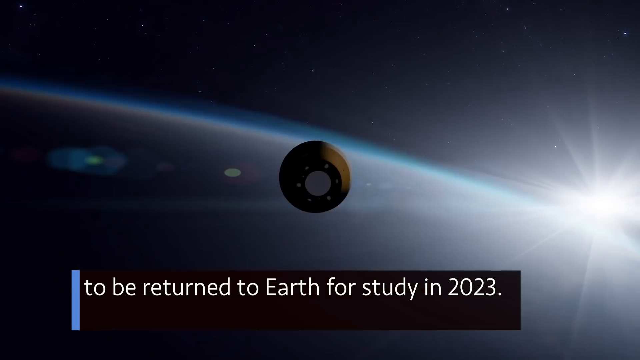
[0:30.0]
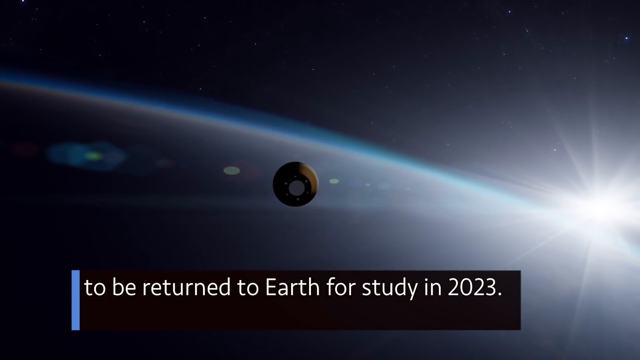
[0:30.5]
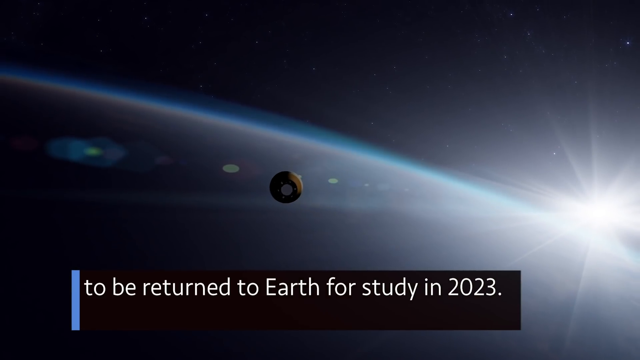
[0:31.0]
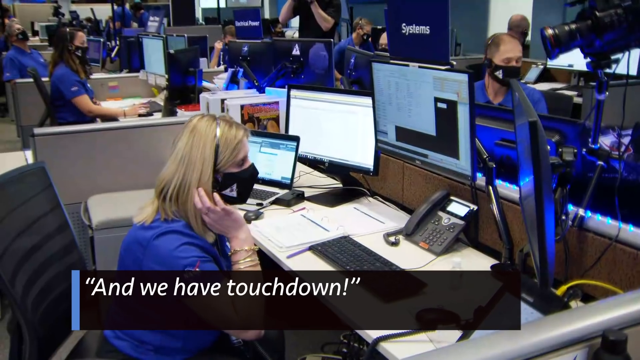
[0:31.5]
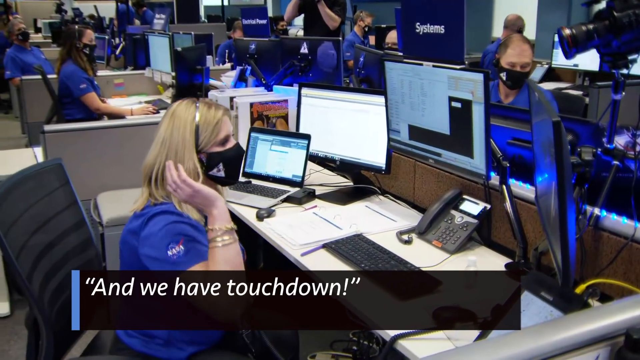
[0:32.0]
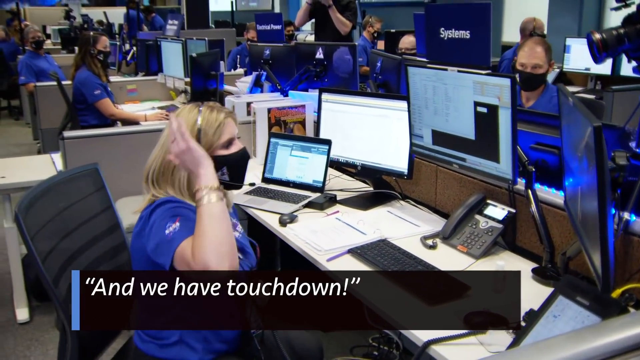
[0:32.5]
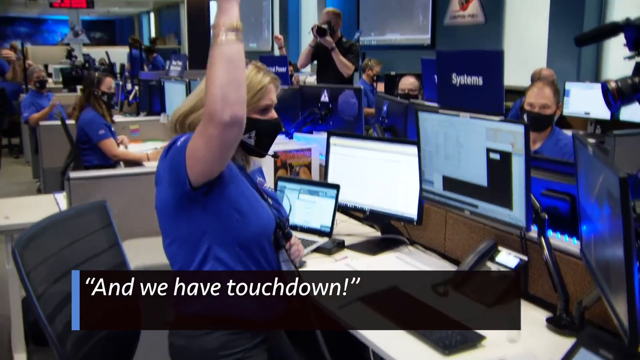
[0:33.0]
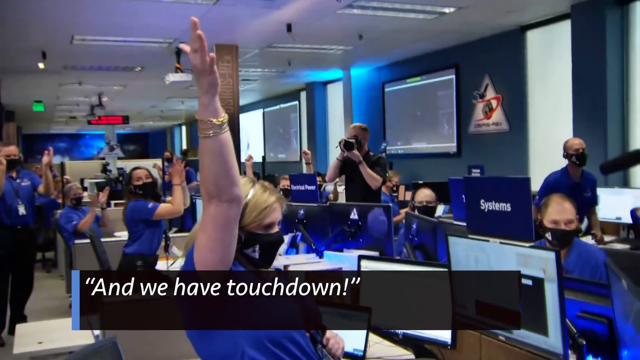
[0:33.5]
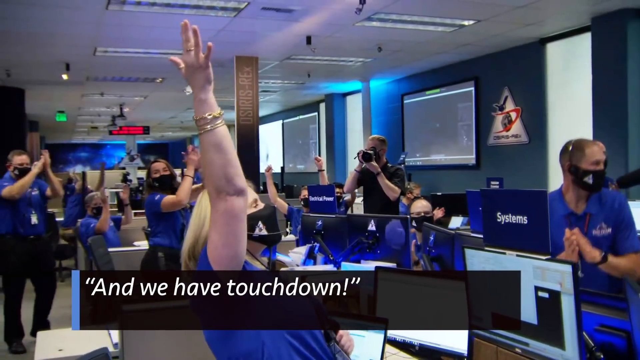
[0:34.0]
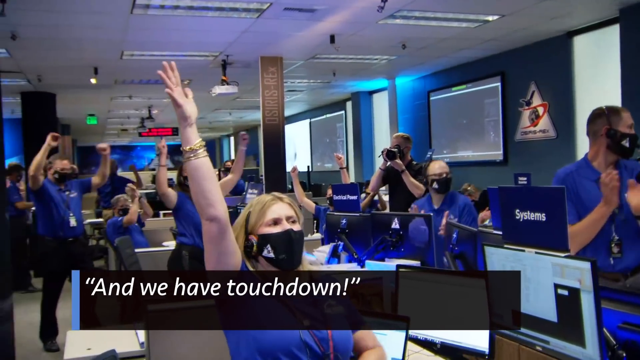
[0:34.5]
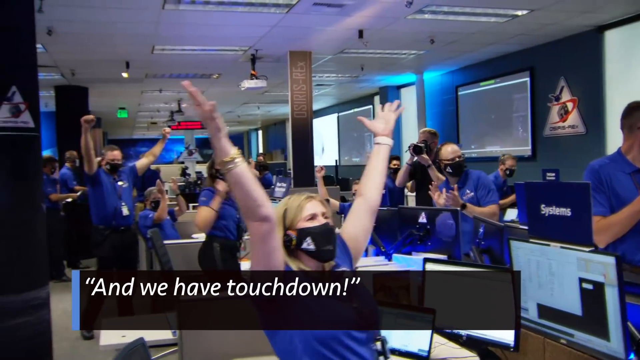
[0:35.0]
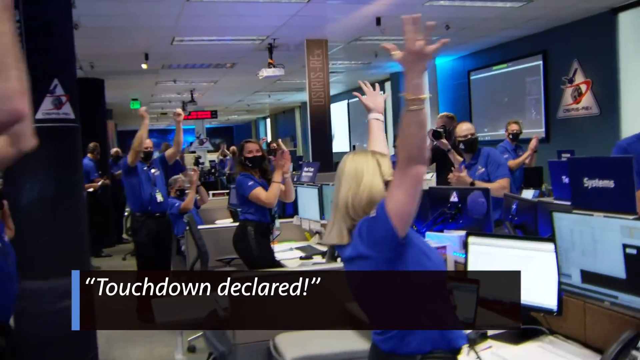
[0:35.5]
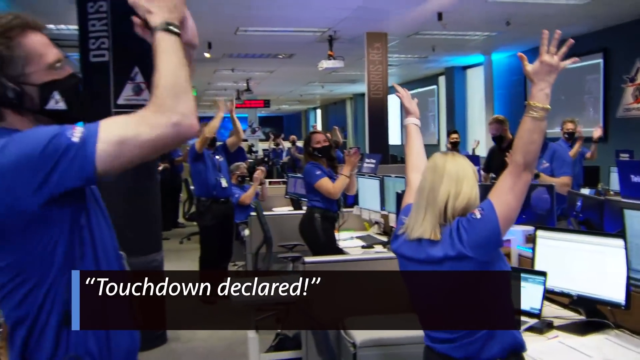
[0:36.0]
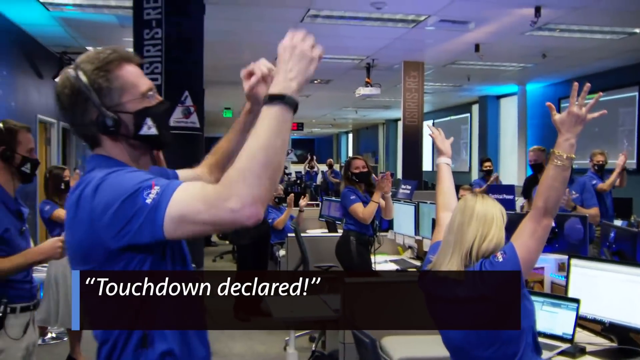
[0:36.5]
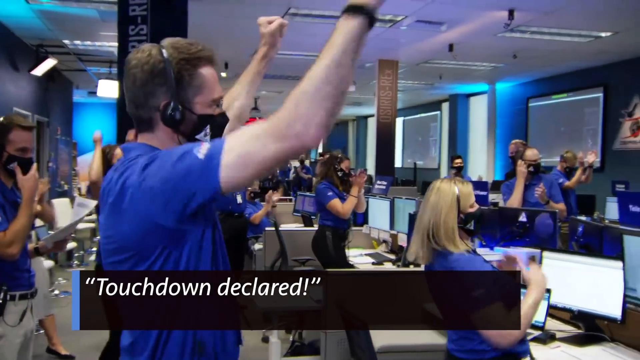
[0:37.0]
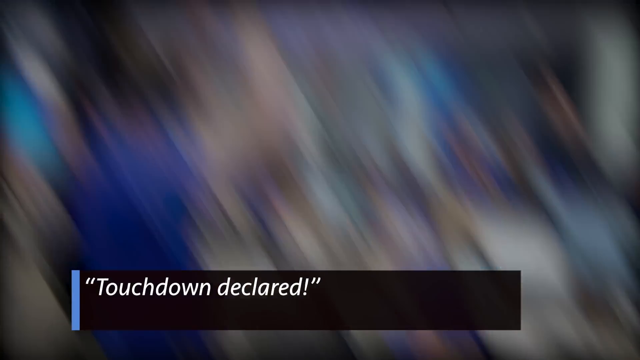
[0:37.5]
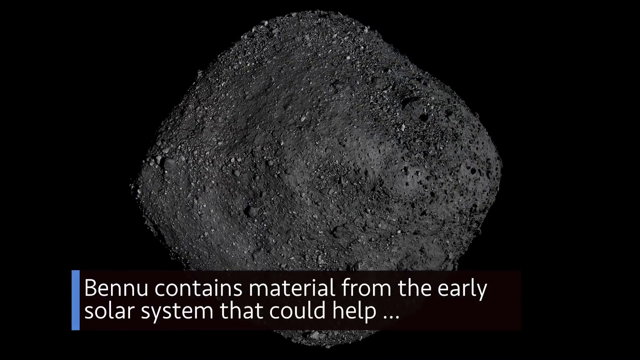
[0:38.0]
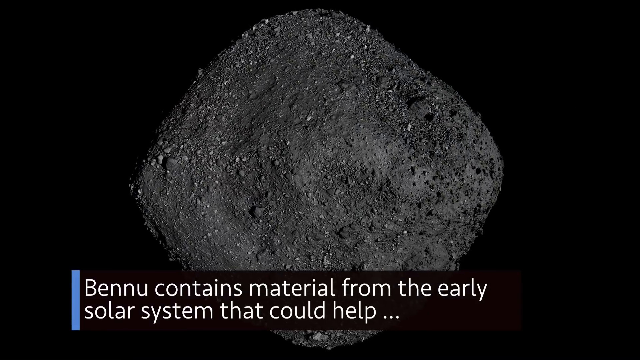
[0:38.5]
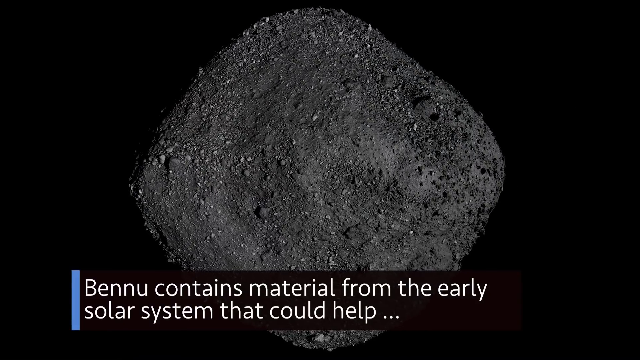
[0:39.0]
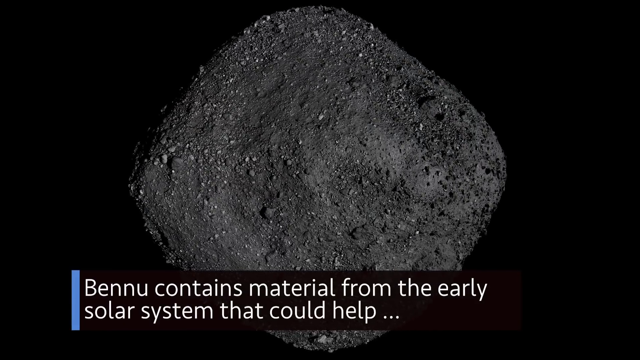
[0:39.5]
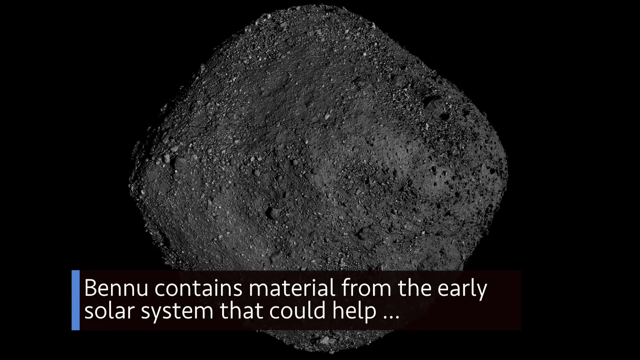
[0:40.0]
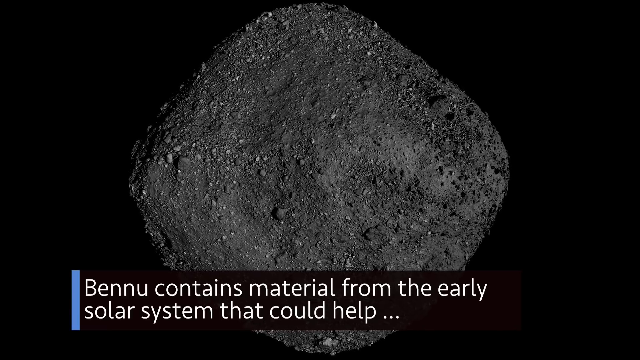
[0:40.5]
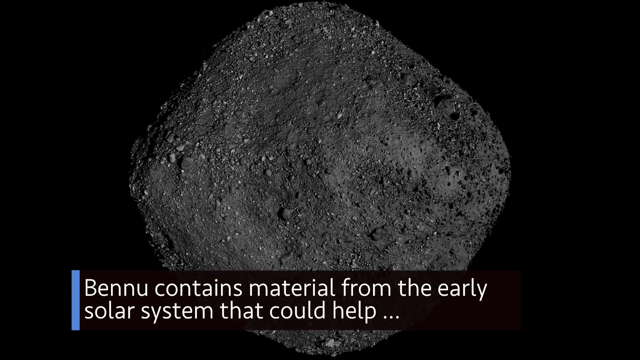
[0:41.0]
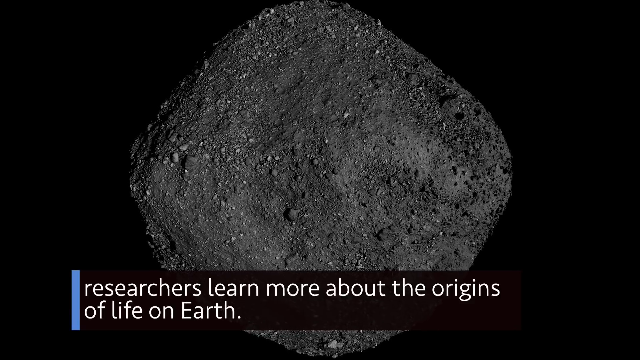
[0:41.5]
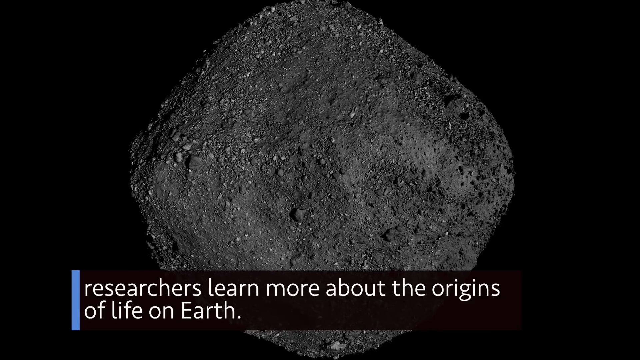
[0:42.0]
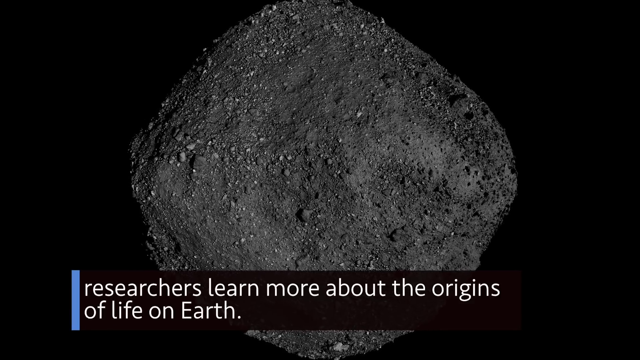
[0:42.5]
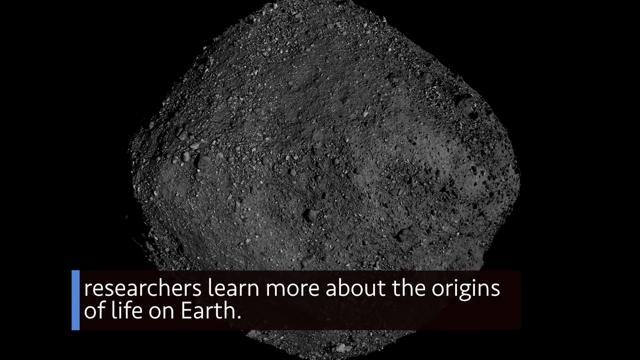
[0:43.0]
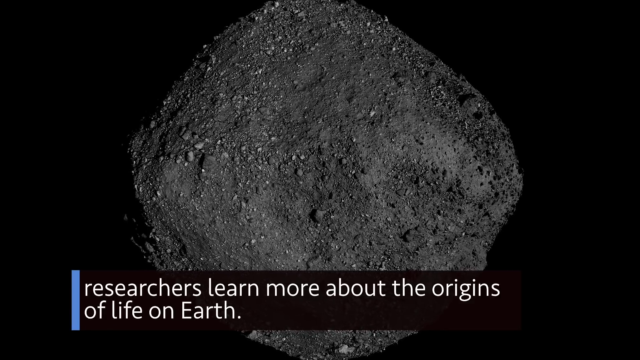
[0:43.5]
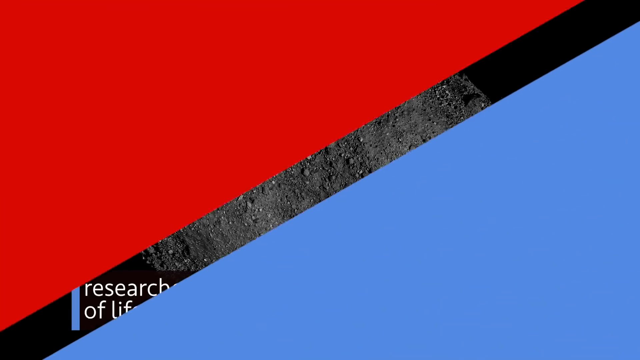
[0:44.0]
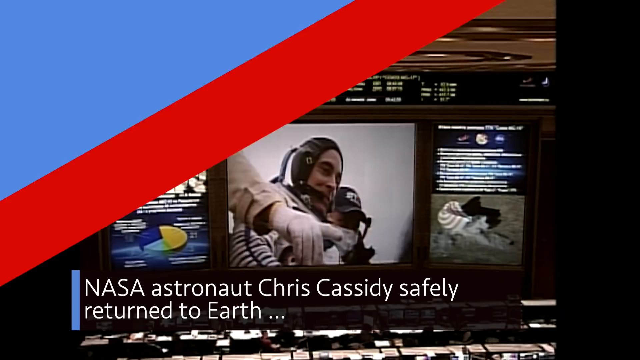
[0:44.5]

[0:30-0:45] The NASA spaceship returns from the asteroid with its samples and heads back to Earth. A crowd of people celebrates the successful return, apparently at the NASA Space Center. The captions seem to say that matter from an asteroid is being explored to learn more about the origins of life on Earth and the origins of the solar system. The astronaut is back on Earth safely, and all of the people are smiling and cheering. NASA Jet Propulsion Laboratory, California Institute of Technology is also referenced.